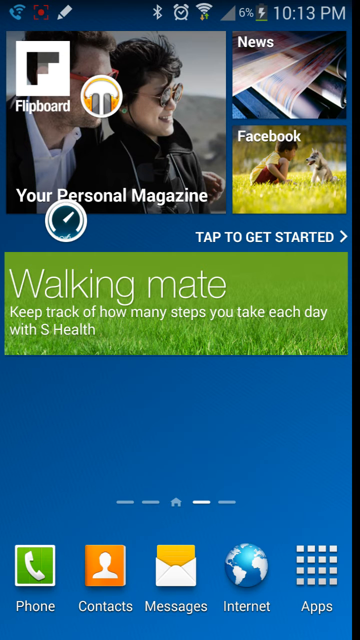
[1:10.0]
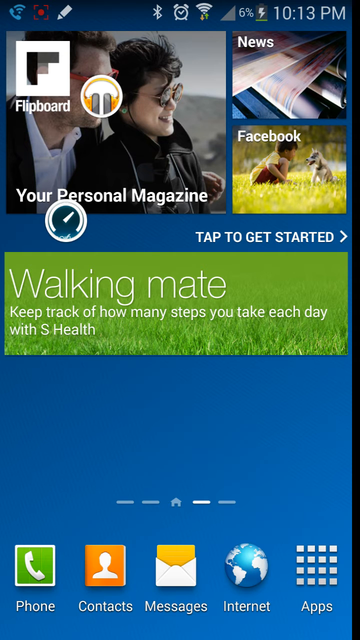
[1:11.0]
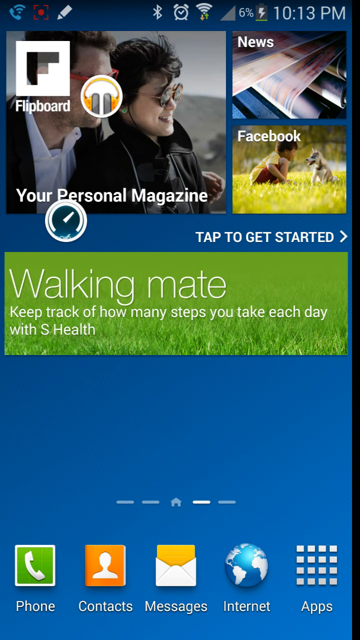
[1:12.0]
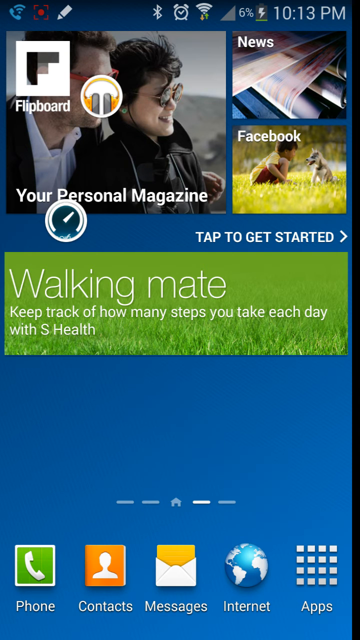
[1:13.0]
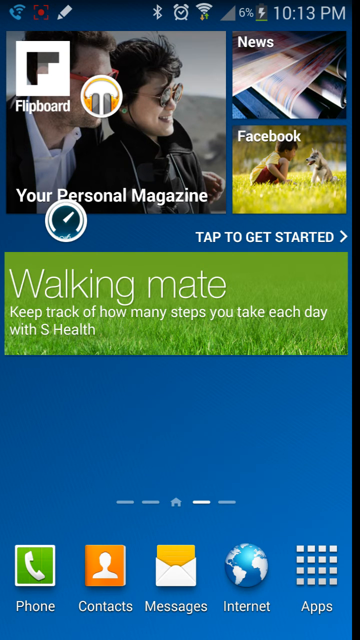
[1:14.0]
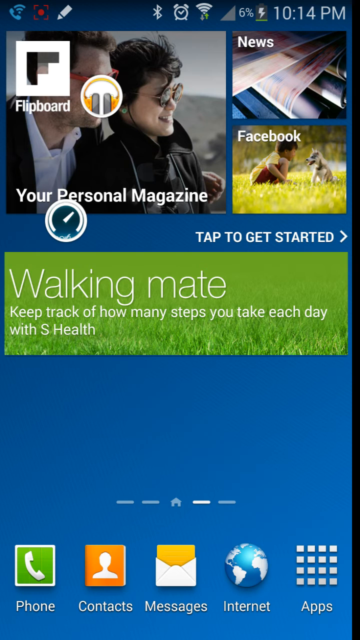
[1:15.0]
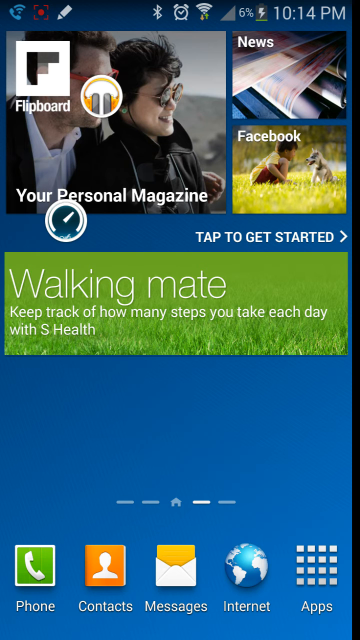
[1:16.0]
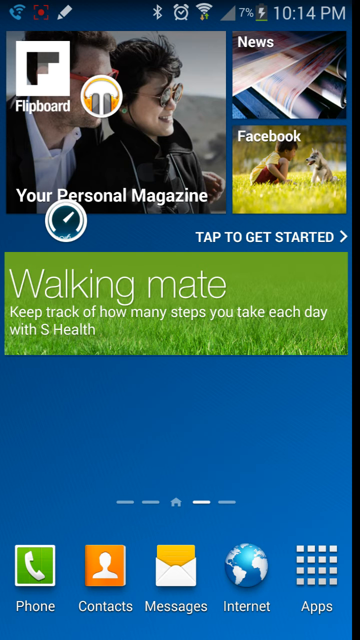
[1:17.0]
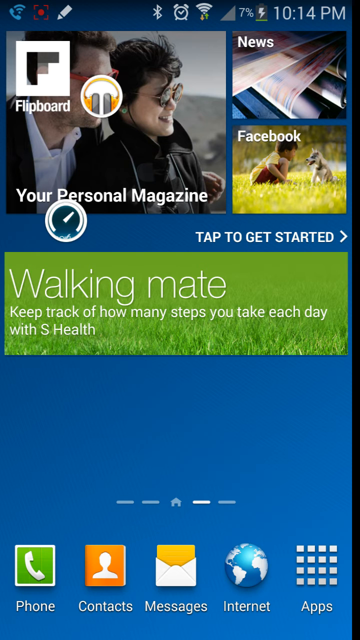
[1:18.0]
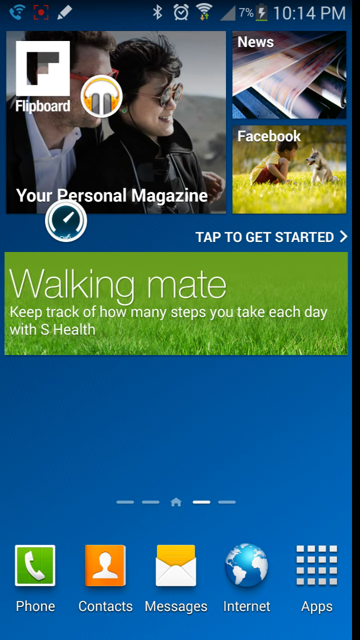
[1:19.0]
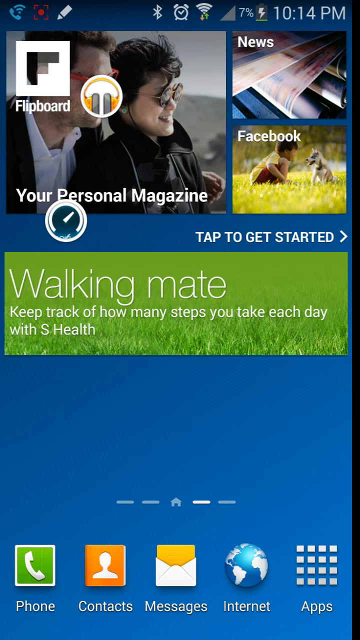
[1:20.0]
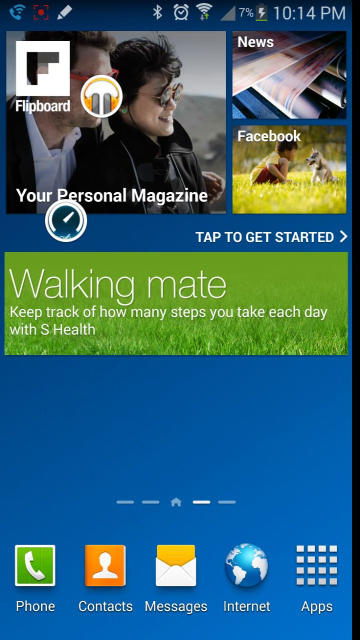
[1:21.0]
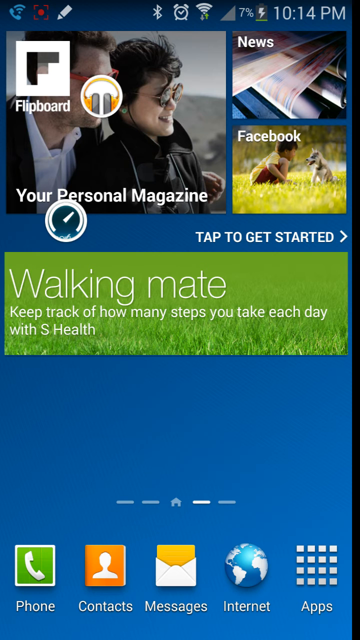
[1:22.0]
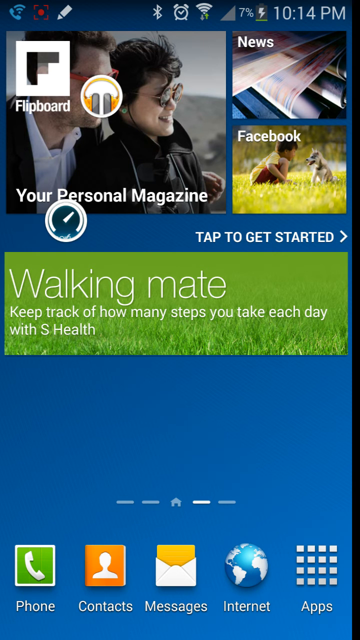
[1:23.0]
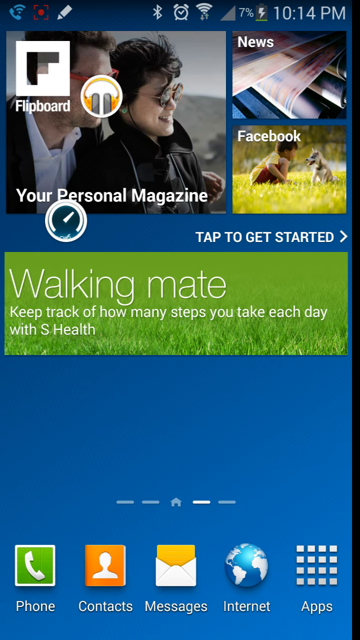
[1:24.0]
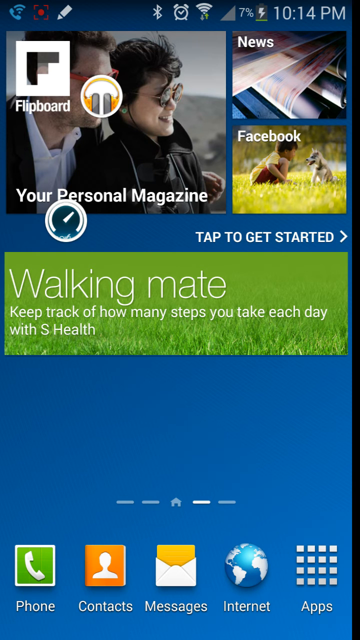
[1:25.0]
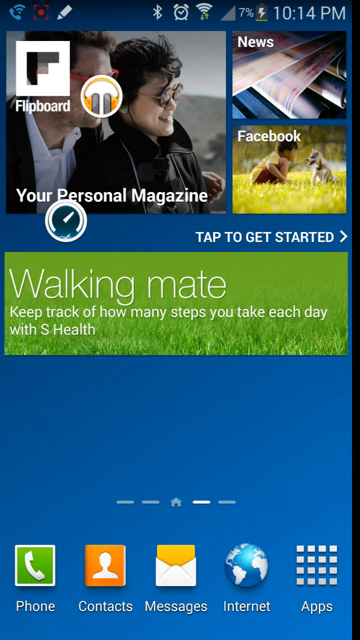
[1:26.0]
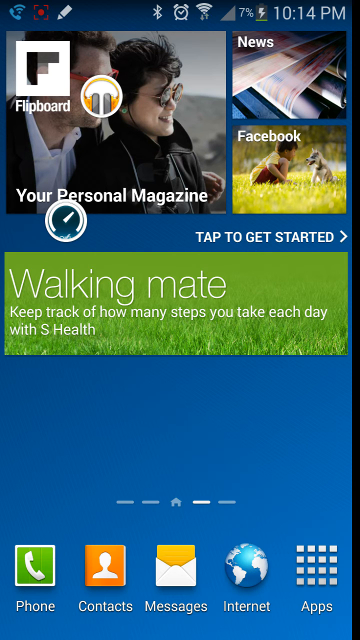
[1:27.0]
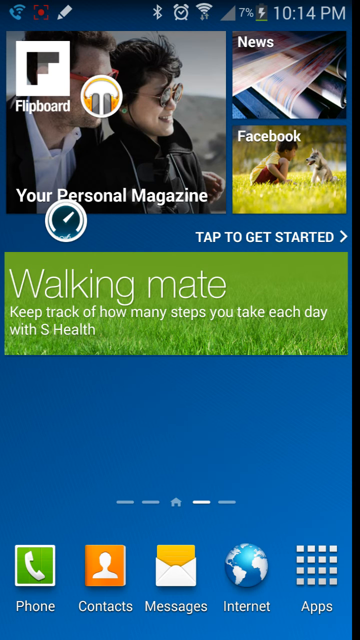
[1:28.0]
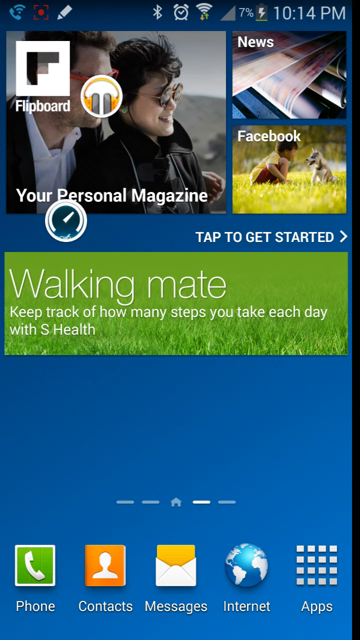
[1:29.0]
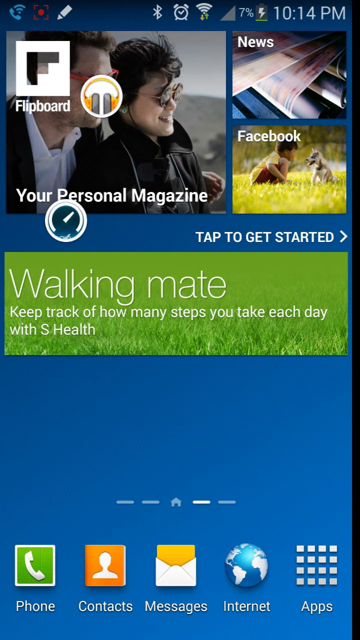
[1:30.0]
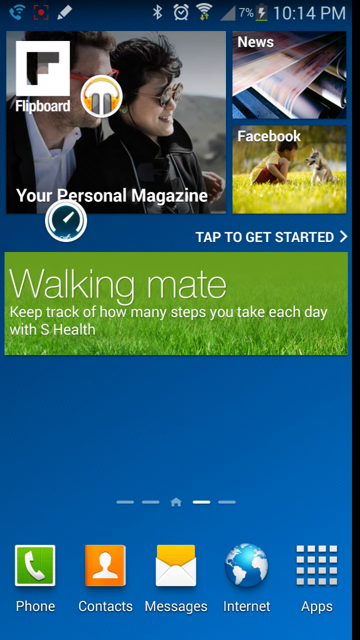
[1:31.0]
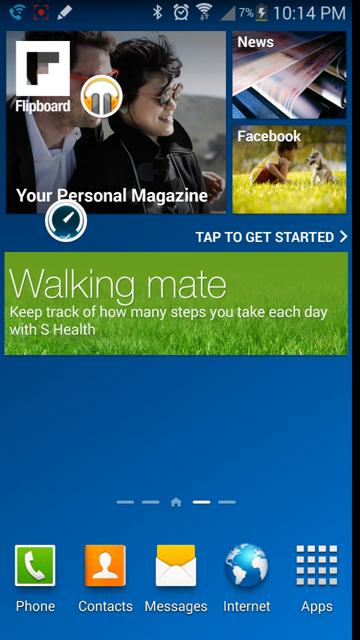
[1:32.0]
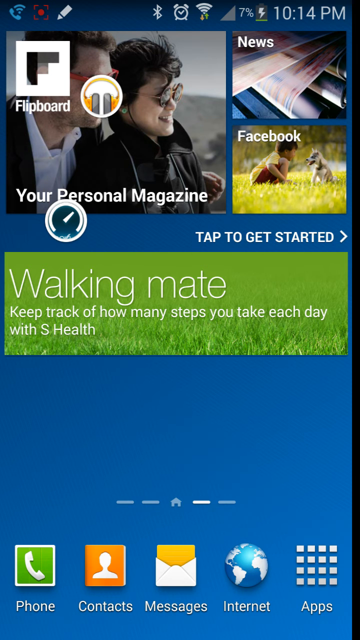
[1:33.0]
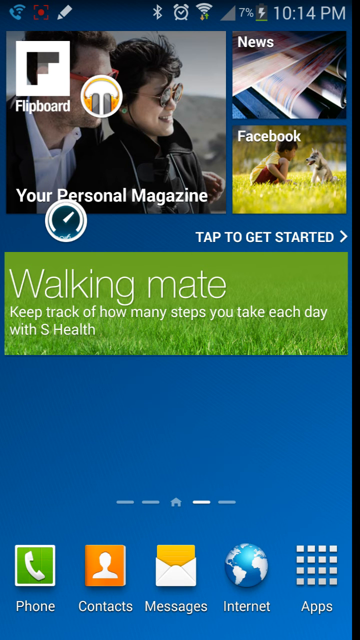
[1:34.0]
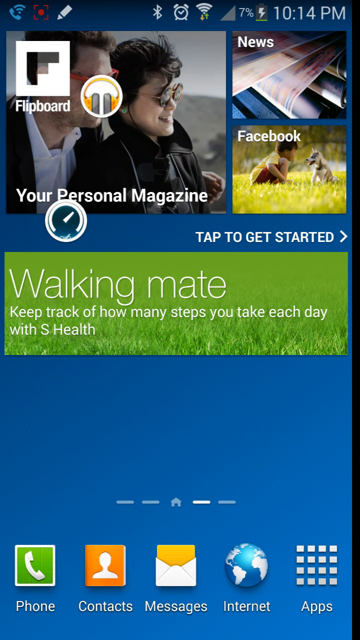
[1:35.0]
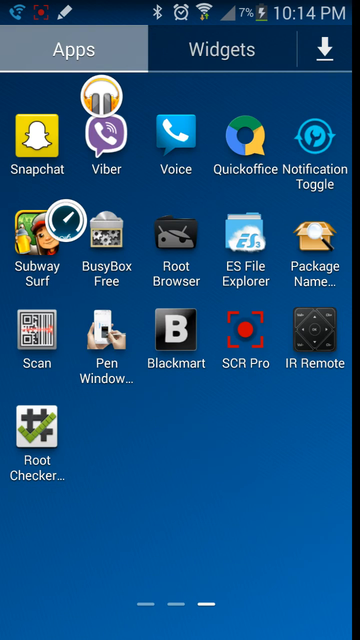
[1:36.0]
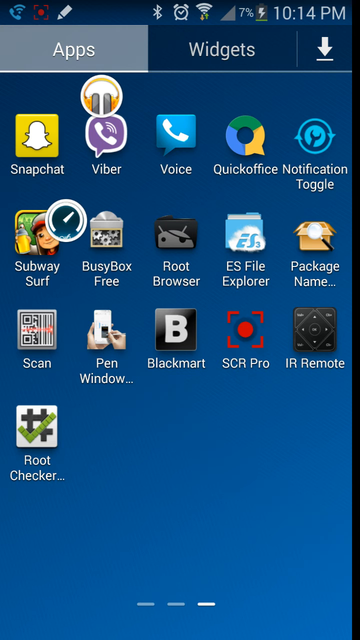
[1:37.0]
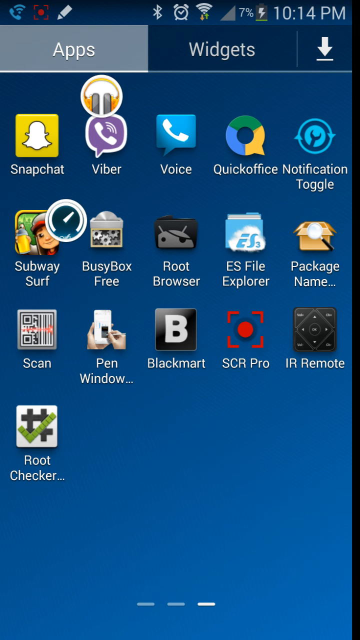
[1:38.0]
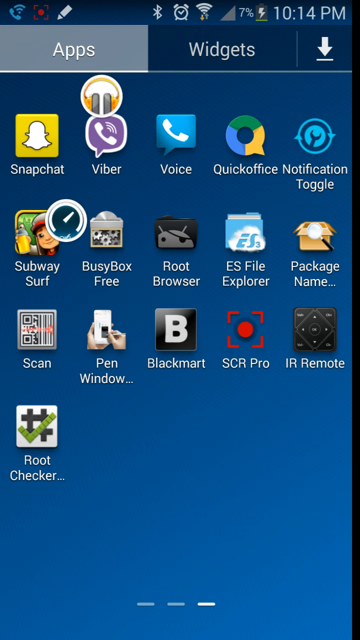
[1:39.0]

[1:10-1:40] With the root access app minimized, a Flipboard screen appears with three options: "Your Personal Magazine," "News" and "Facebook," and below it "Tap to get started." There is also the text "Walking Mate, keep track at how many steps you take each day with S Health." It seems to be the phone's home screen, possibly with a Flipboard app icon and a wallpaper showing those options. The user waits on this screen for a while, then opens the app menu, which shows several apps including Snapchat, Viber, Voice, Quickoffice, Notification Toggle, Subway Surf, Busy Box Free and Root Browser, among others.